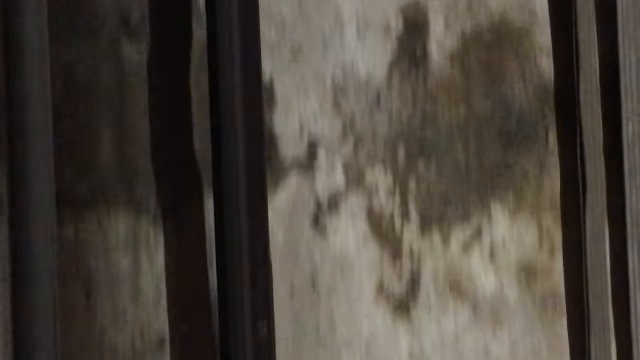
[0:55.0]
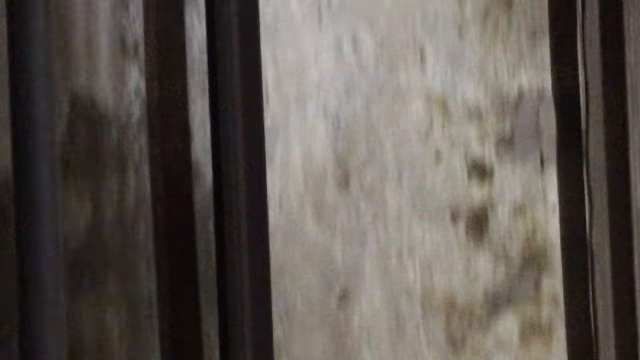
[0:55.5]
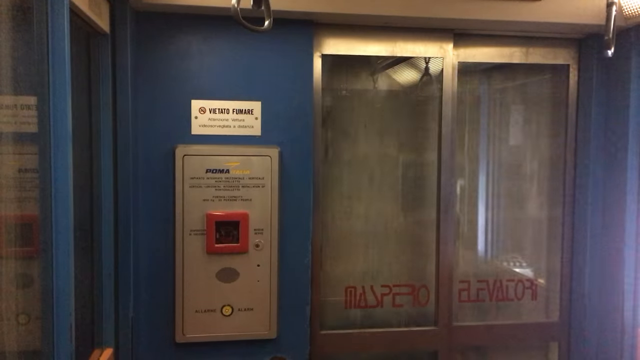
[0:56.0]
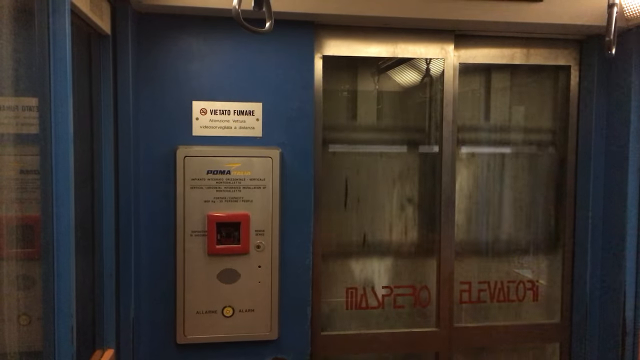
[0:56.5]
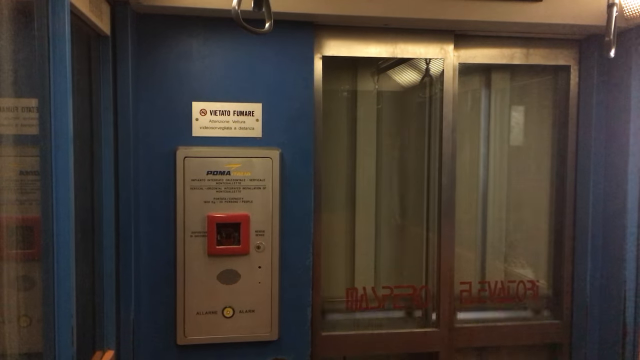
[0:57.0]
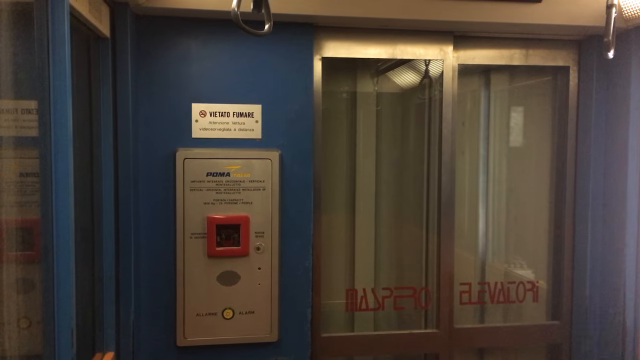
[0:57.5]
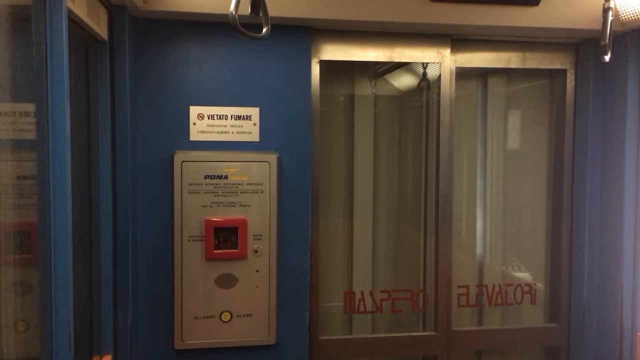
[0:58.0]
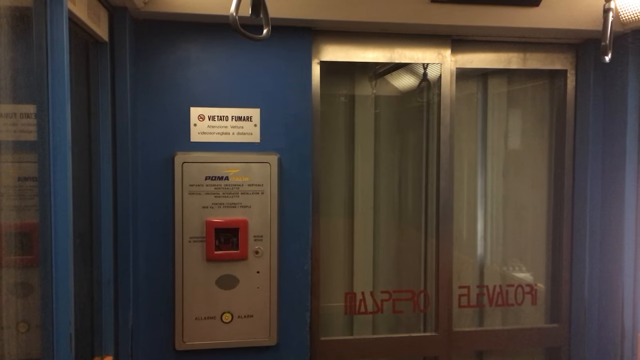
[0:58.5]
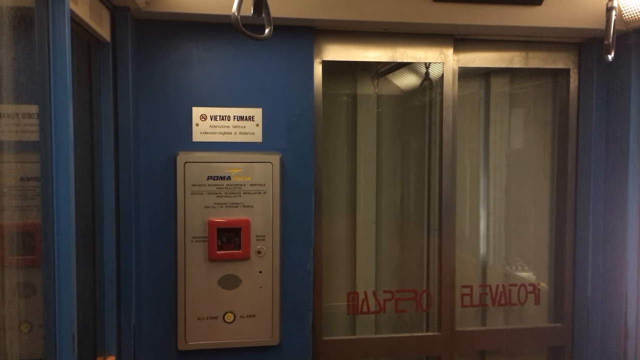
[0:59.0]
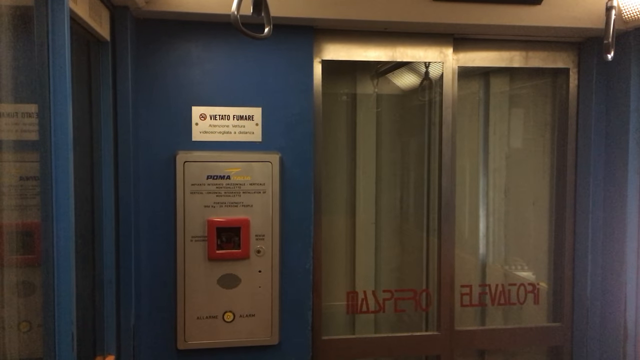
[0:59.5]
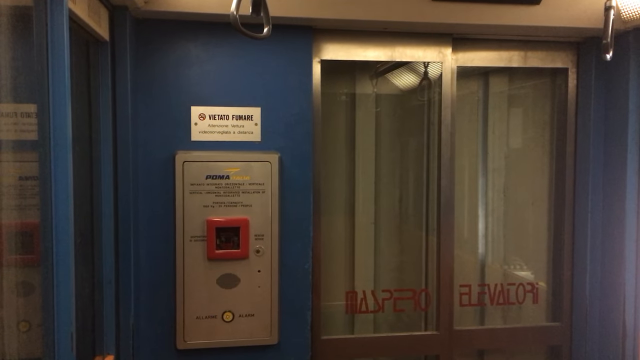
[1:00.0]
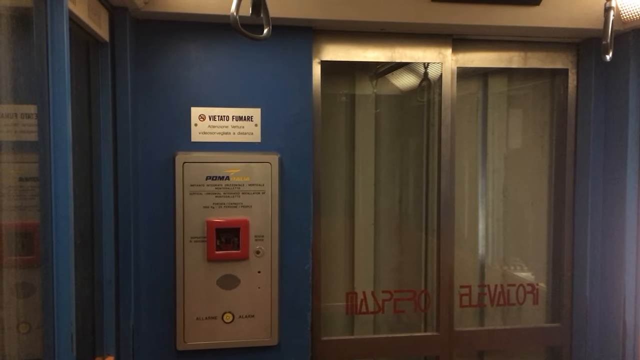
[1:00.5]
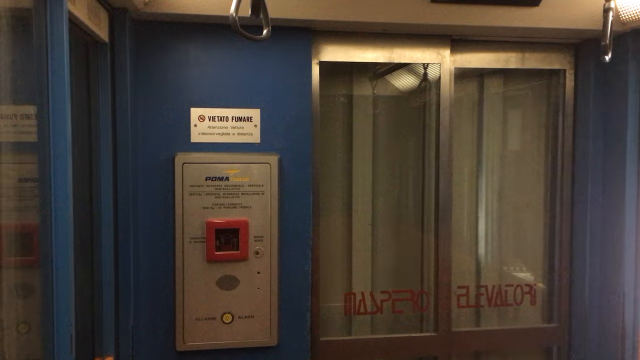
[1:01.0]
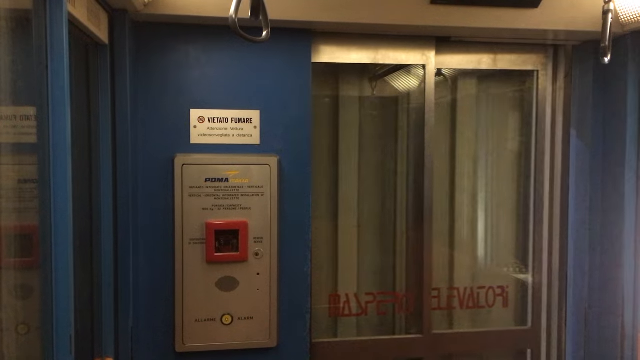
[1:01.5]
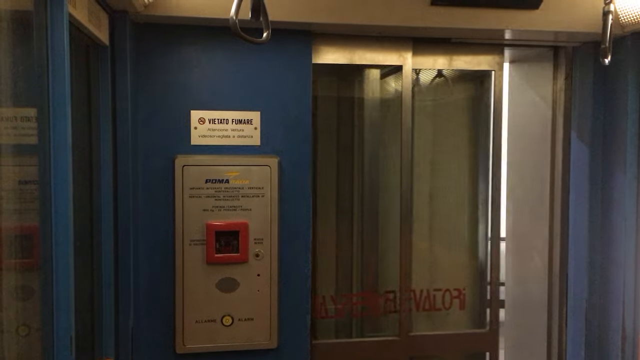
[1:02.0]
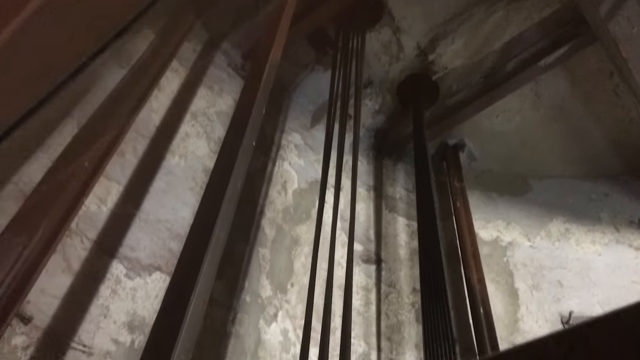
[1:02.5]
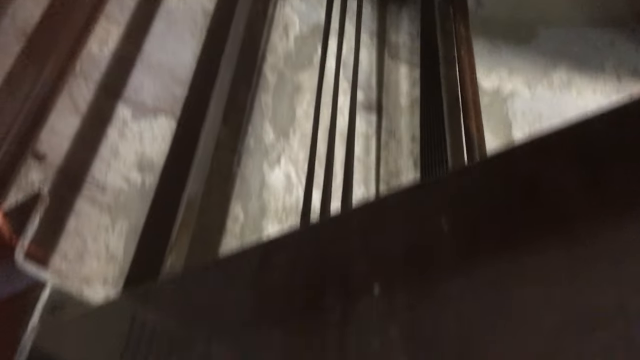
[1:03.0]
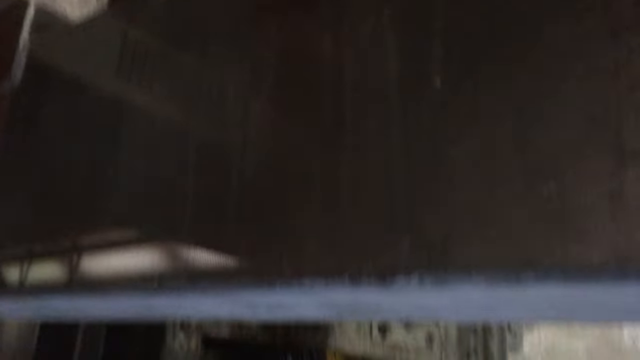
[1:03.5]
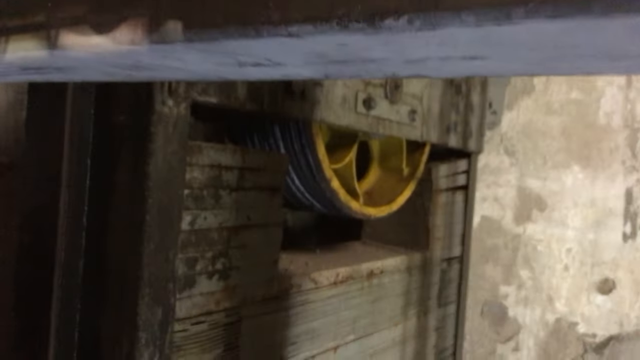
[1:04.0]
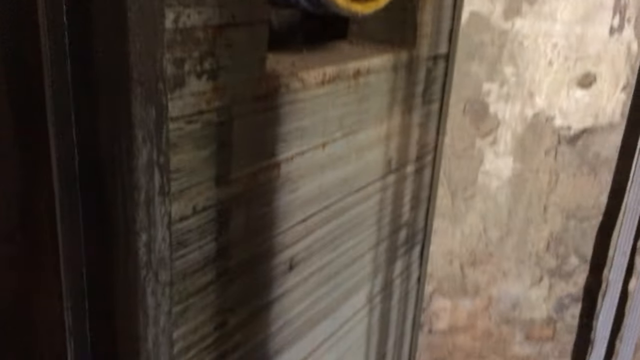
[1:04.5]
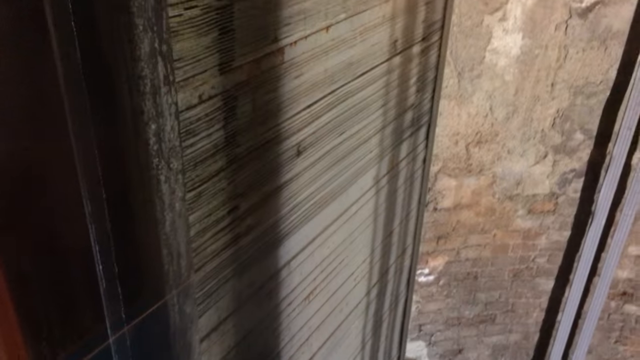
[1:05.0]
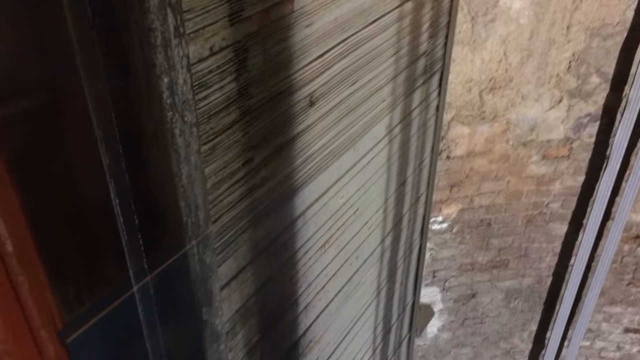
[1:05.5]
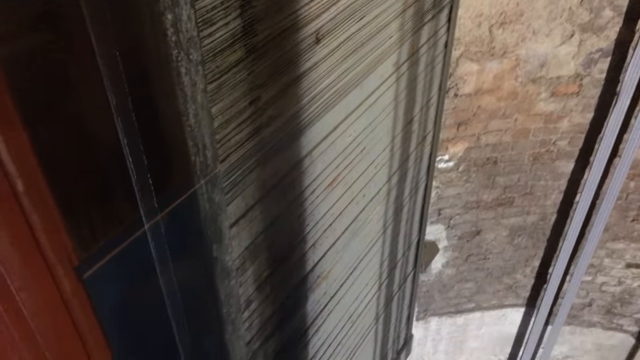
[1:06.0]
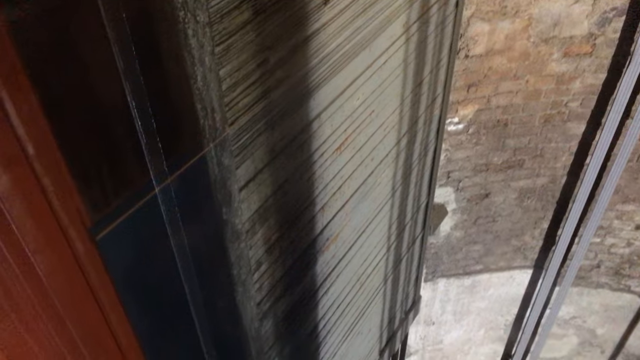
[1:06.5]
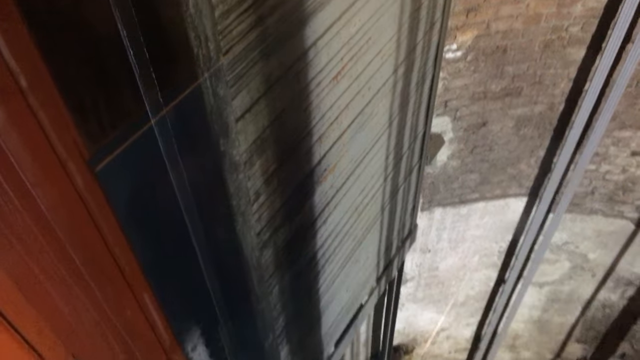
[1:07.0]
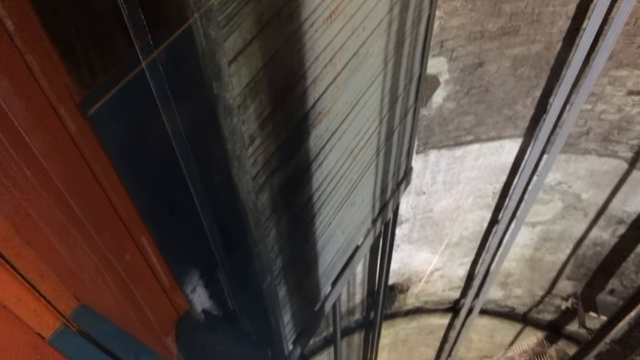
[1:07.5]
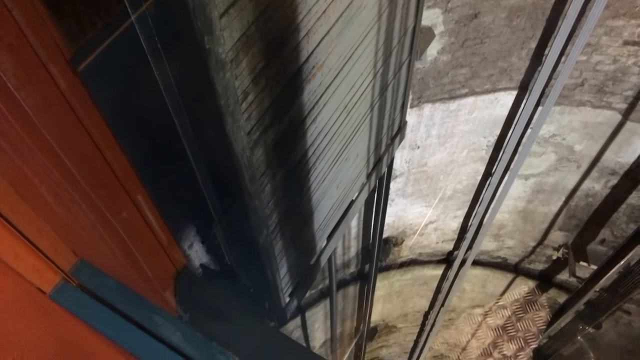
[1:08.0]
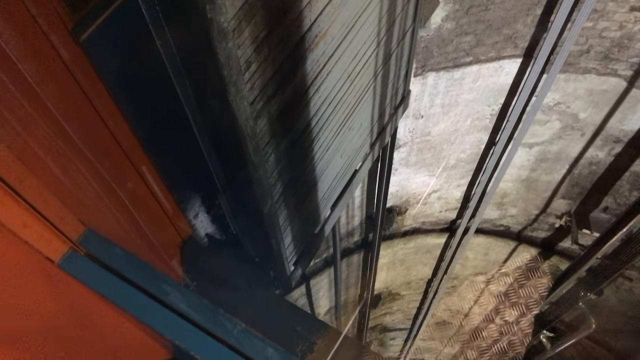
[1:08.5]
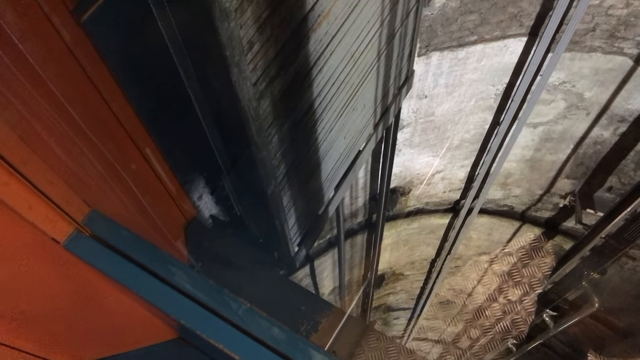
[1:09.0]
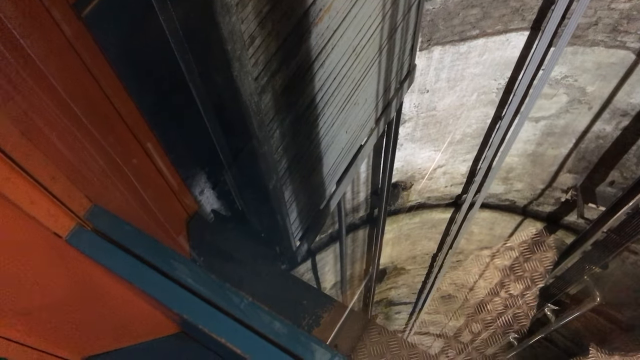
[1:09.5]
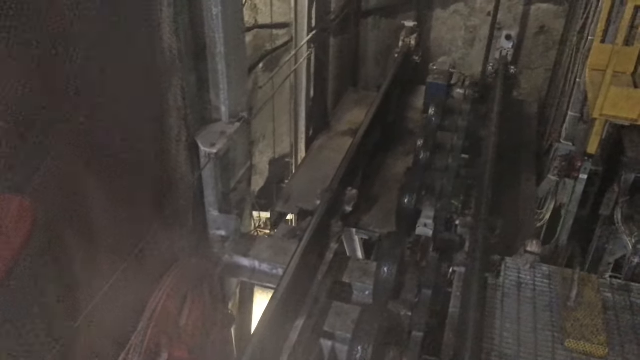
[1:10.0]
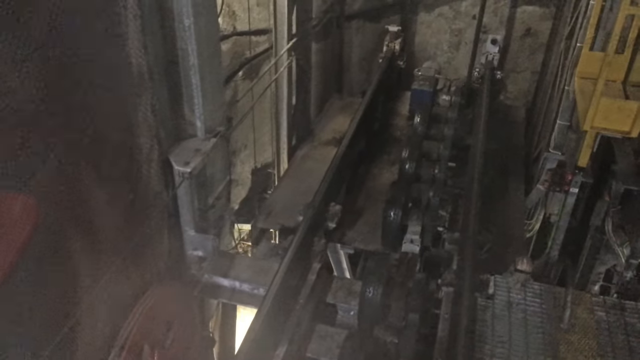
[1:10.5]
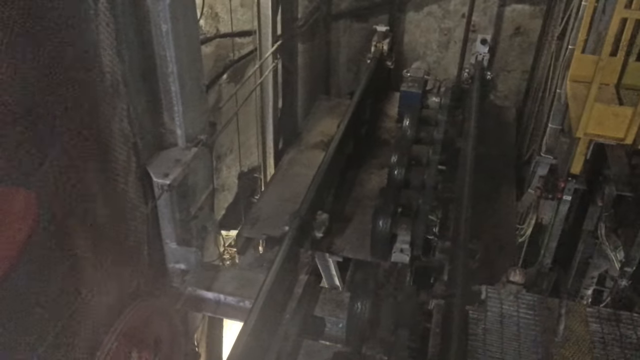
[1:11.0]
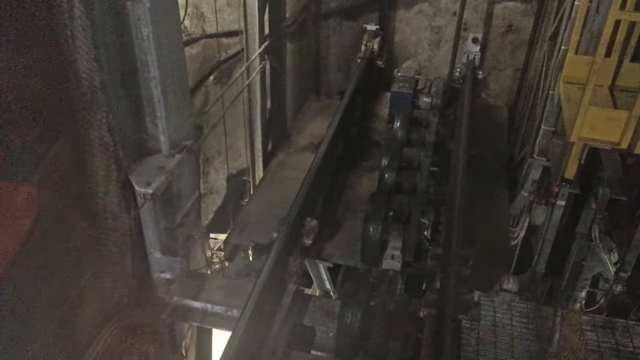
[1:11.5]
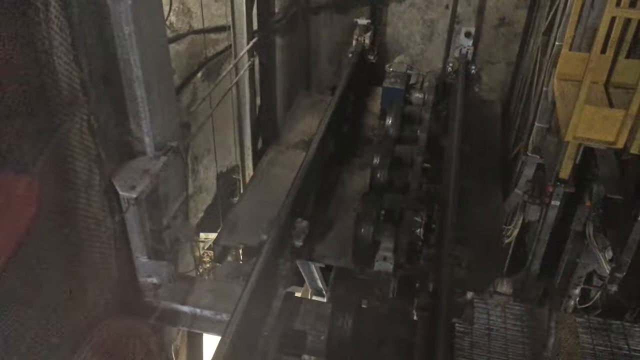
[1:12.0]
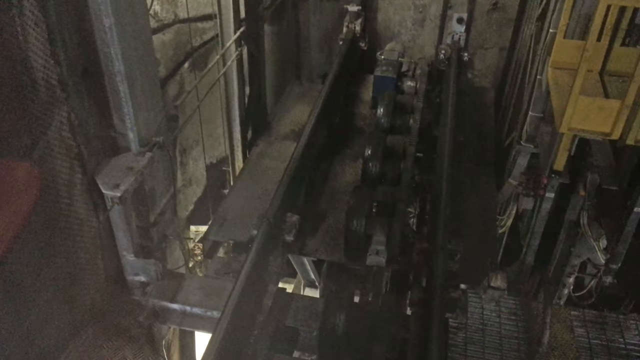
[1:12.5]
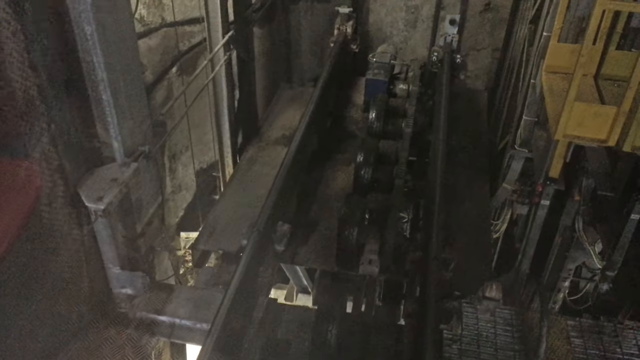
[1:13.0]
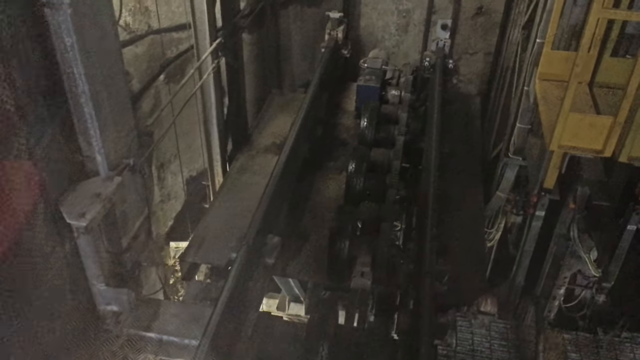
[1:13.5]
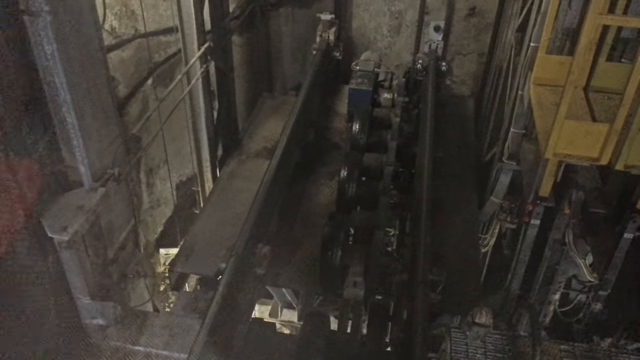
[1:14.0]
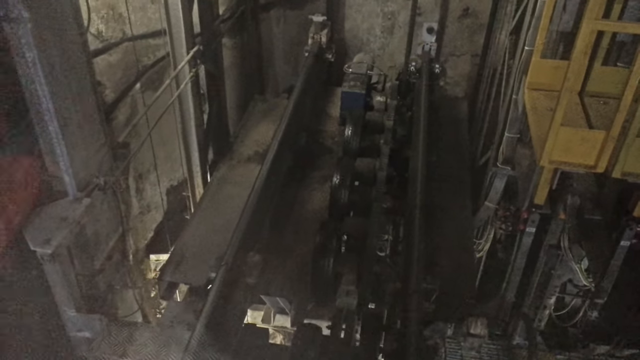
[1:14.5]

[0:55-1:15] The elevator keeps going upwards and stops at a blue wall, where the doors open. Then there is a view apparently into the shaft, looking all the way down at the walls, the ropes pulling the elevator up the shaft, and the hydraulics that pull it. The stone looks kind of dated, but the machinery looks pretty new. There is silver chrome along the windows and red text on the windows. The wheels and other accents are yellow.